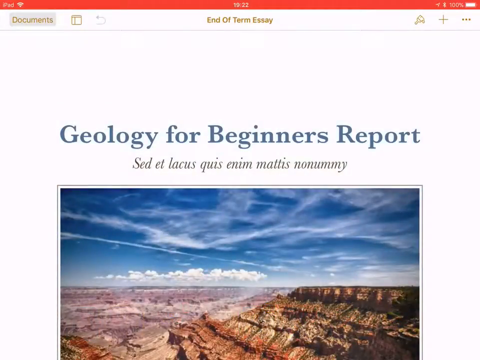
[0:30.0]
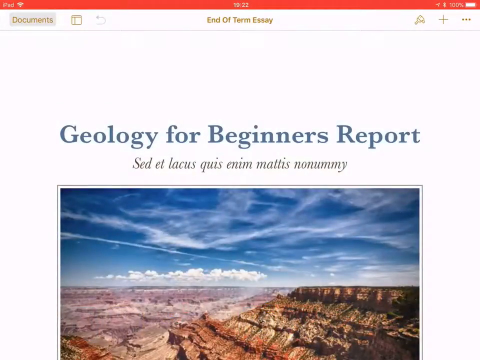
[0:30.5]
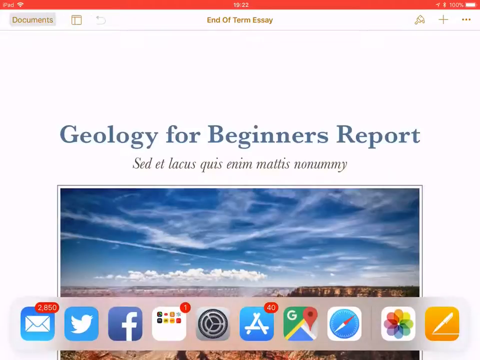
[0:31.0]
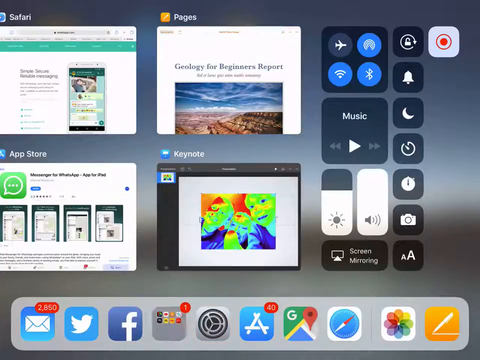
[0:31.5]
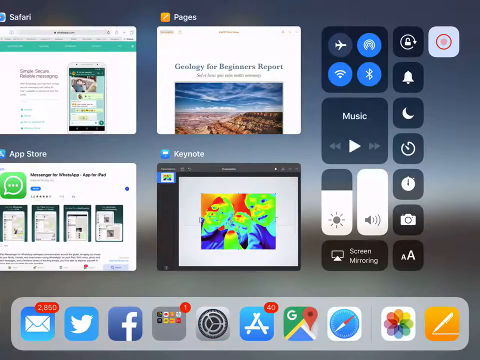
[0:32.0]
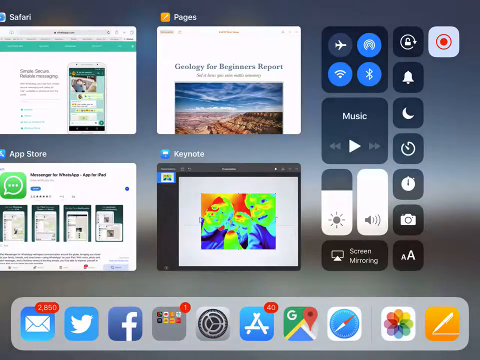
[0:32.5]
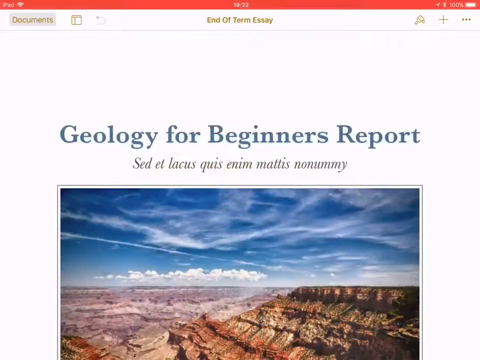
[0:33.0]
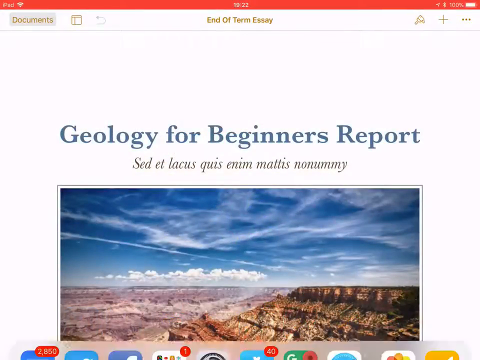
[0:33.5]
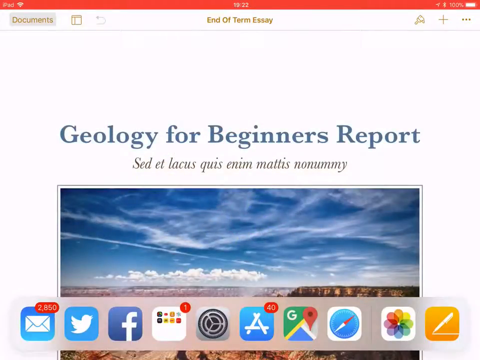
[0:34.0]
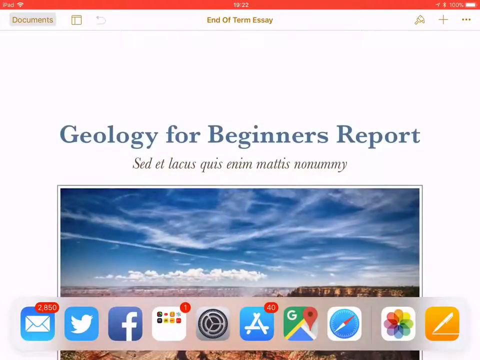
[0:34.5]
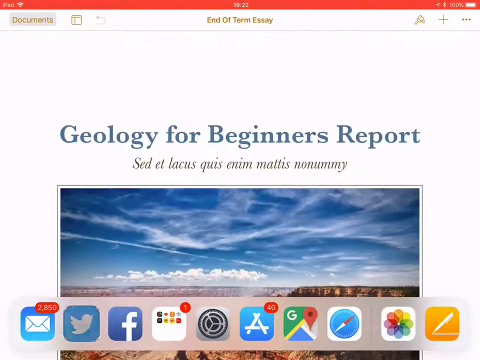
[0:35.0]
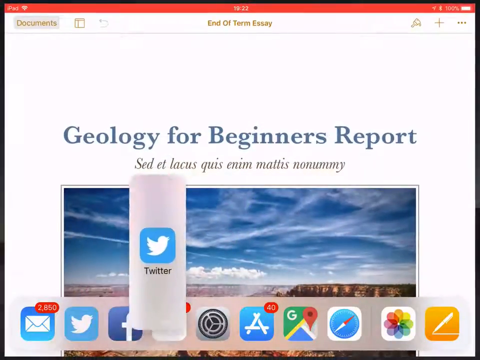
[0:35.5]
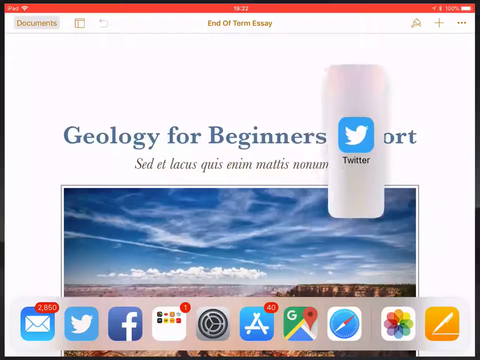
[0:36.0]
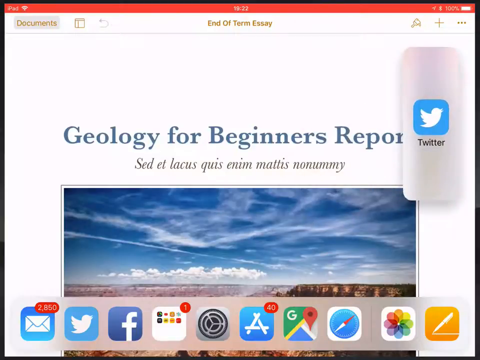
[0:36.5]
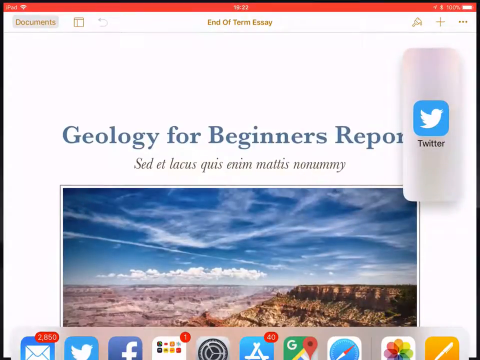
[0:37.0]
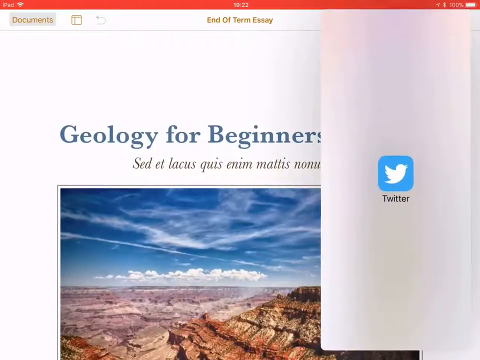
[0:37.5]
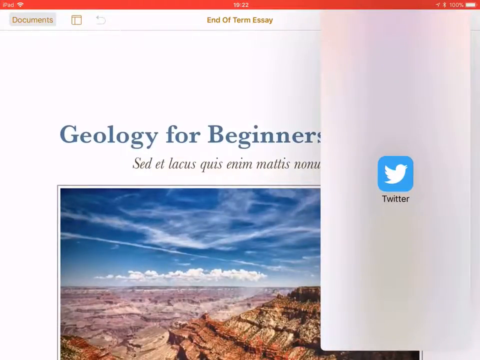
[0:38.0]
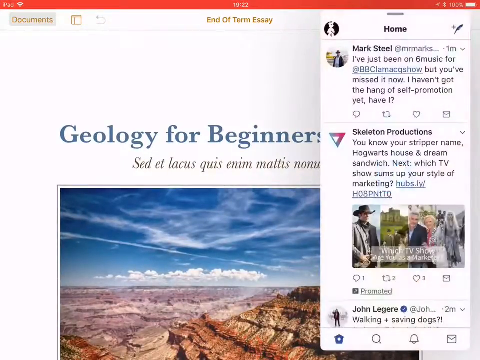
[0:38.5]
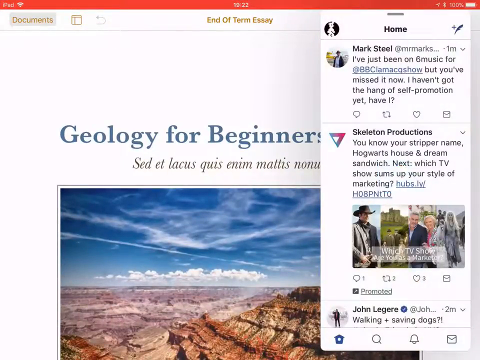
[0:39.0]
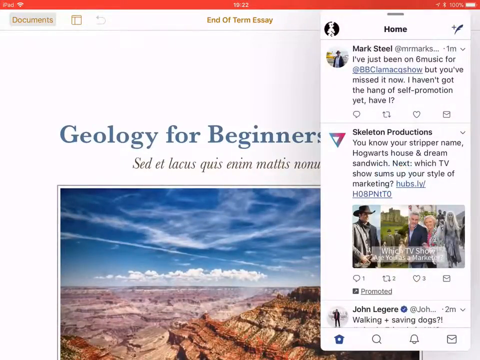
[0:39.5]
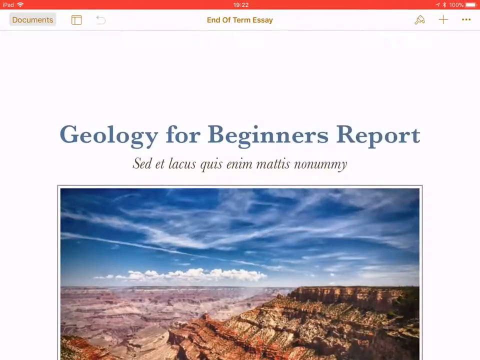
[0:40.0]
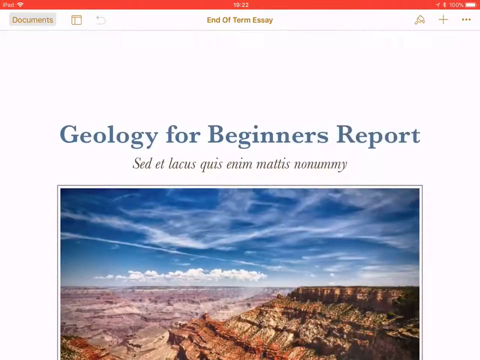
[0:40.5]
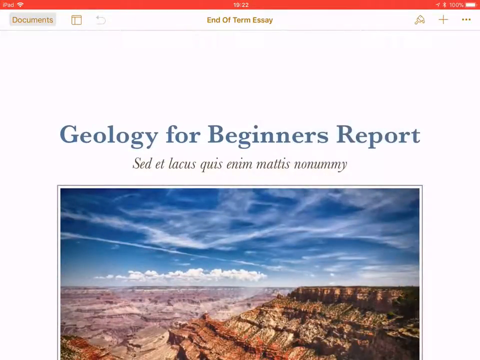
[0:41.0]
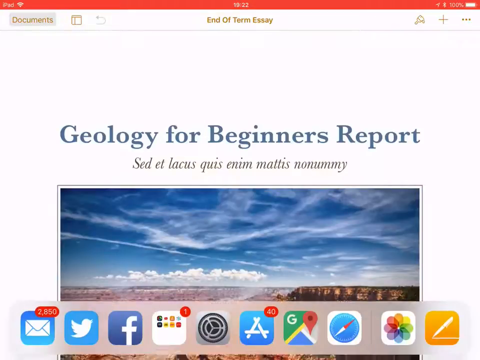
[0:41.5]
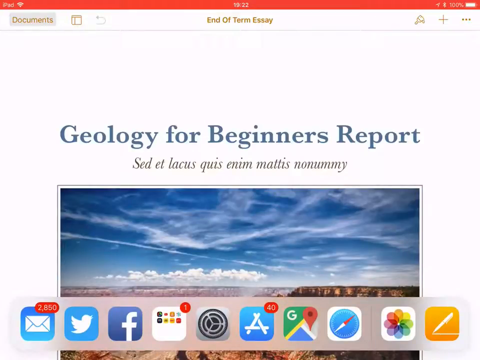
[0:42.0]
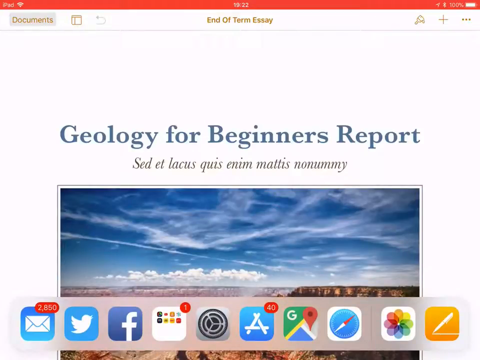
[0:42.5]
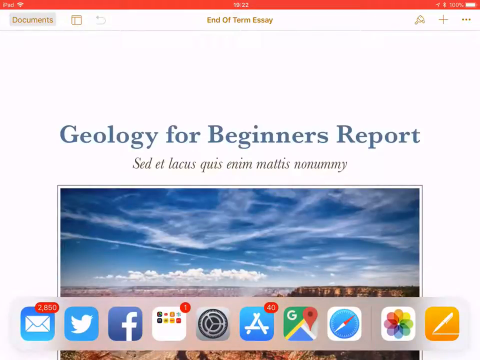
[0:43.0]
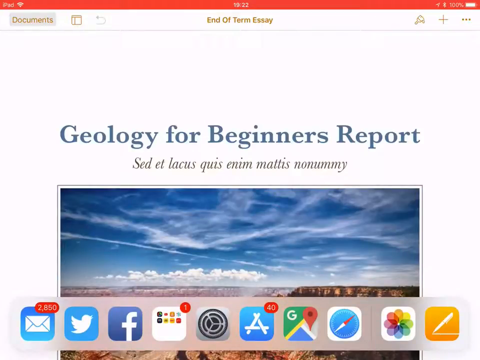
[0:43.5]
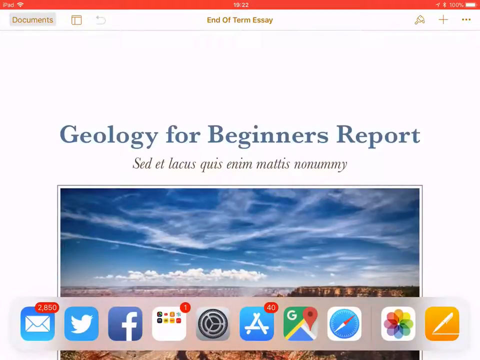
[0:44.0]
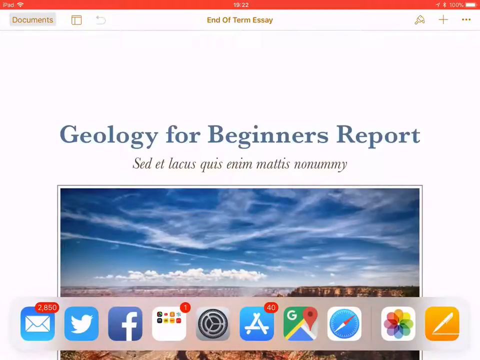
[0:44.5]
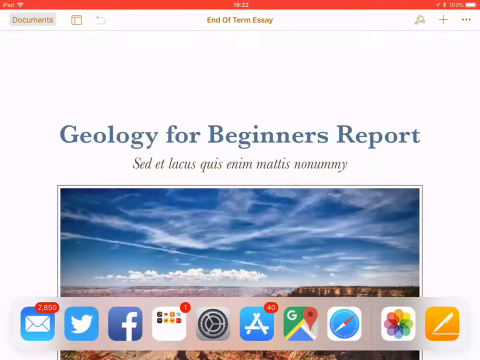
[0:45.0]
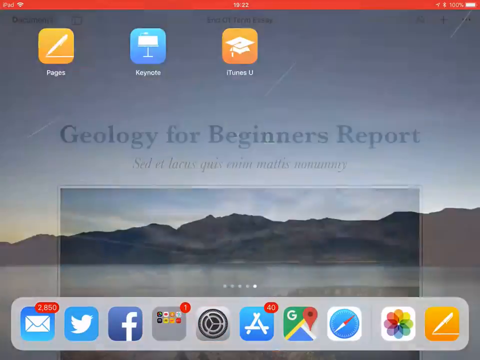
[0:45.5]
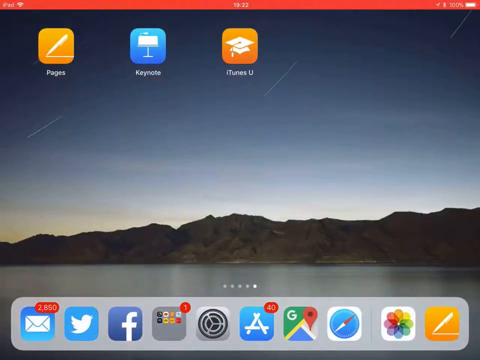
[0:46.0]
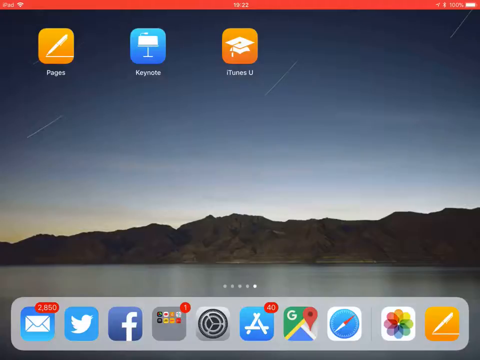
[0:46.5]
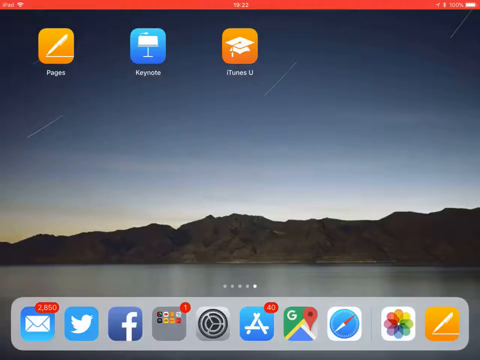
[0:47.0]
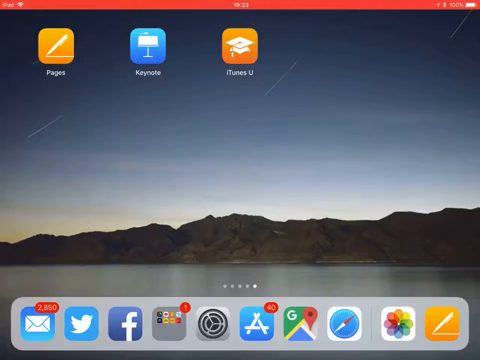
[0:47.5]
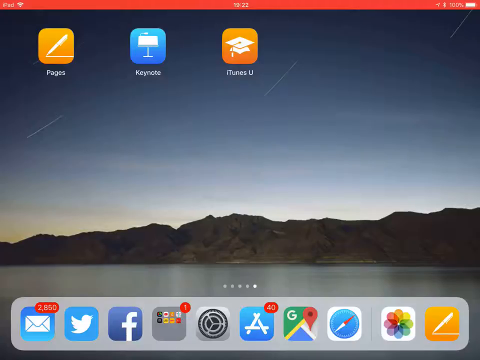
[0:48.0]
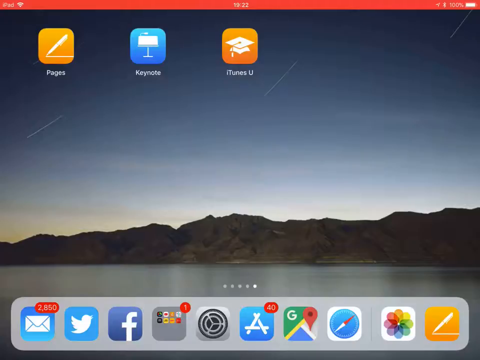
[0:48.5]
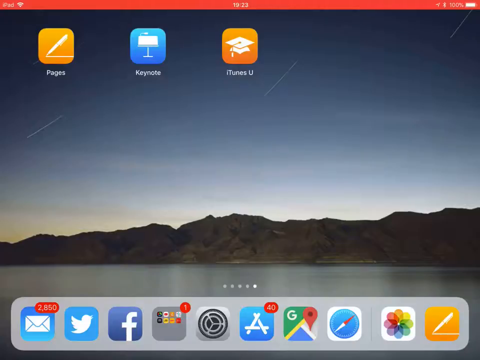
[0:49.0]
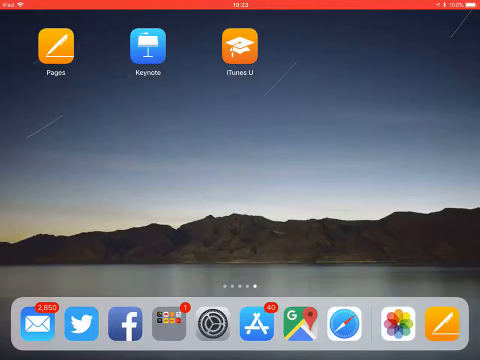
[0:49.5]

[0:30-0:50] A gallery-like view appears in which the open apps are placed side by side. On the right are quick-access buttons: airplane mode, Wi-Fi, Bluetooth, controls for music that is playing, notifications, silence, alarm, volume and brightness up and down, screen mirroring, font size and screen capture. It looks like a cell phone screen, probably an iPhone.